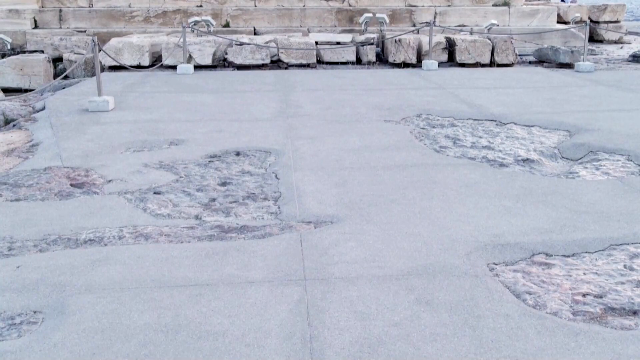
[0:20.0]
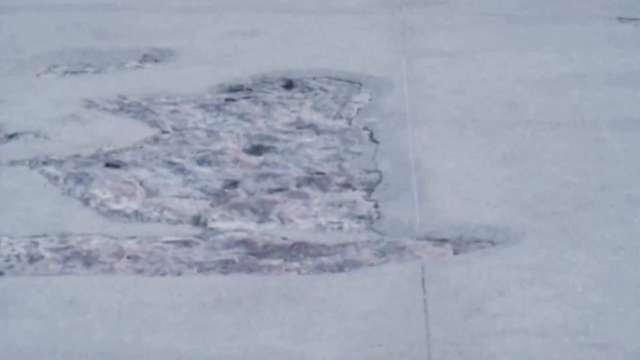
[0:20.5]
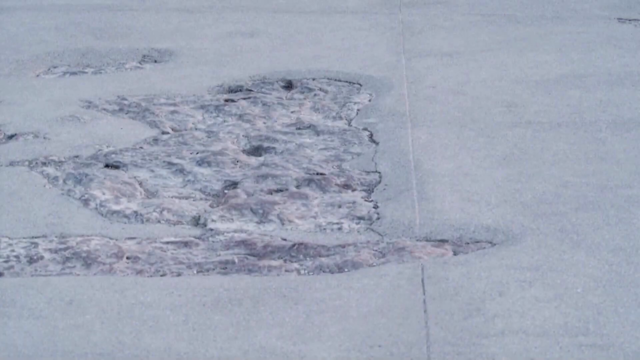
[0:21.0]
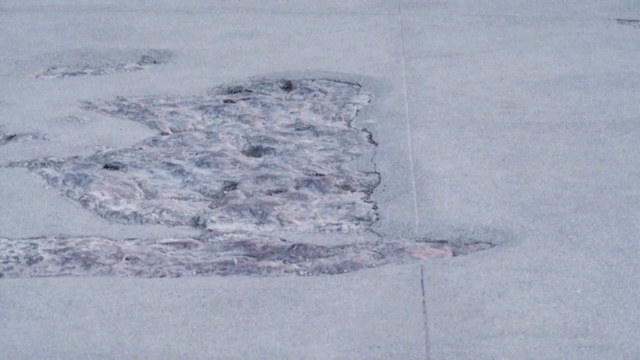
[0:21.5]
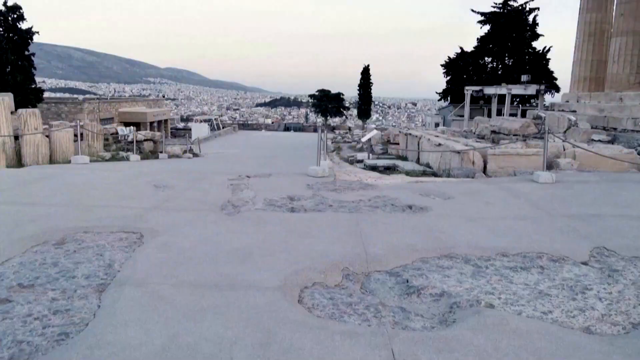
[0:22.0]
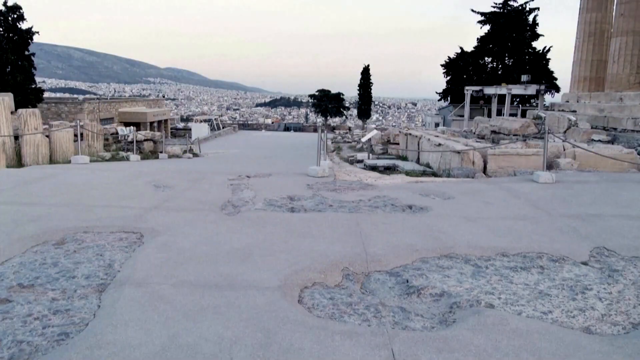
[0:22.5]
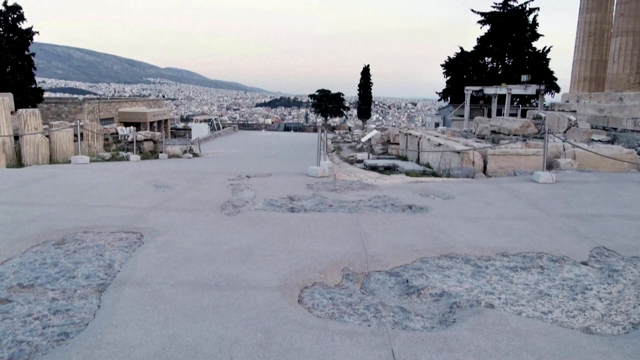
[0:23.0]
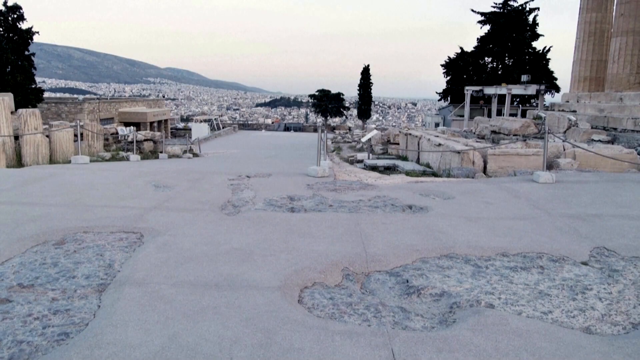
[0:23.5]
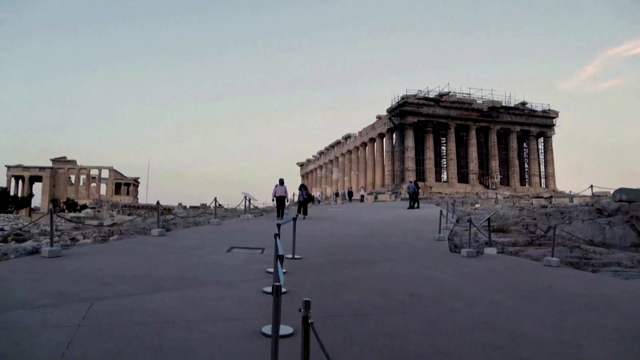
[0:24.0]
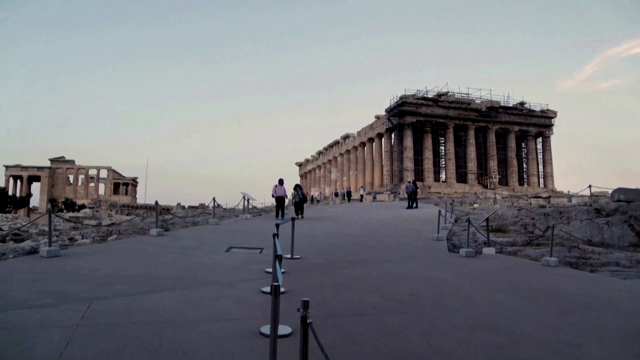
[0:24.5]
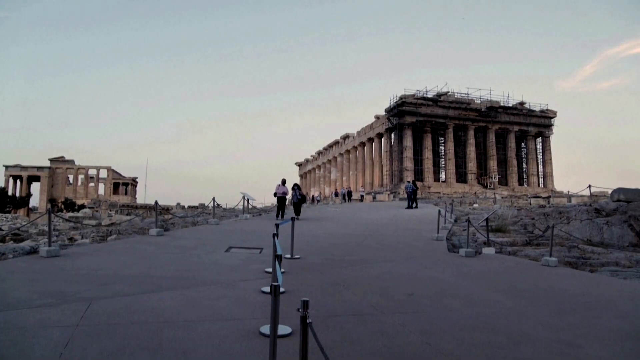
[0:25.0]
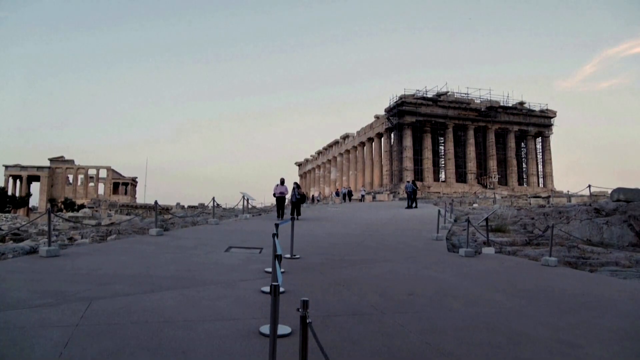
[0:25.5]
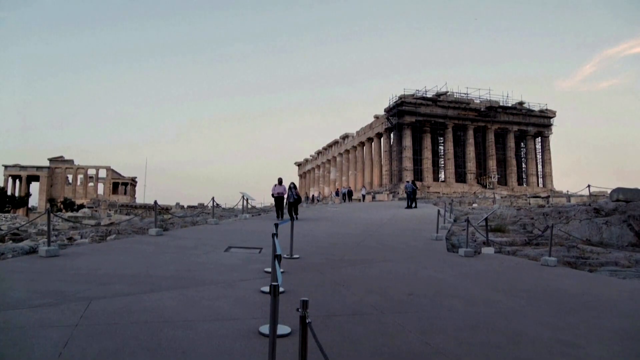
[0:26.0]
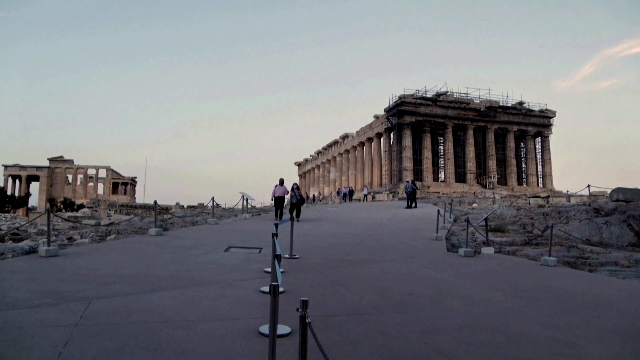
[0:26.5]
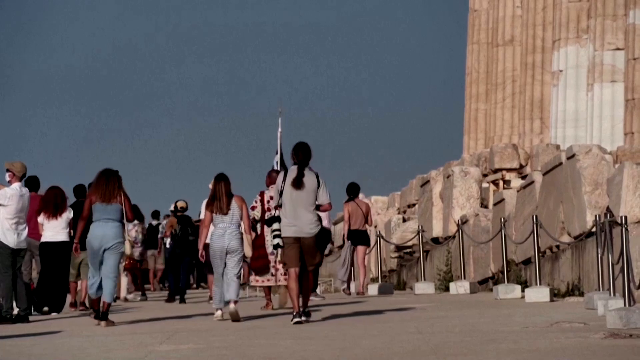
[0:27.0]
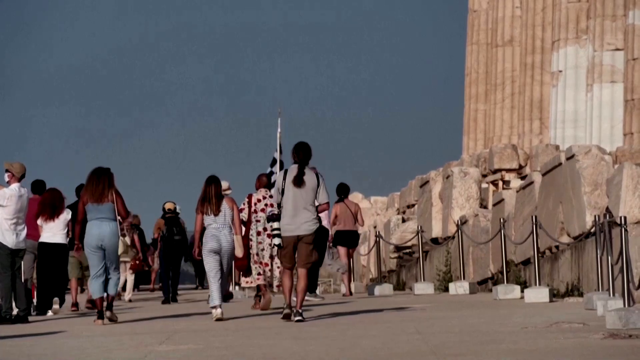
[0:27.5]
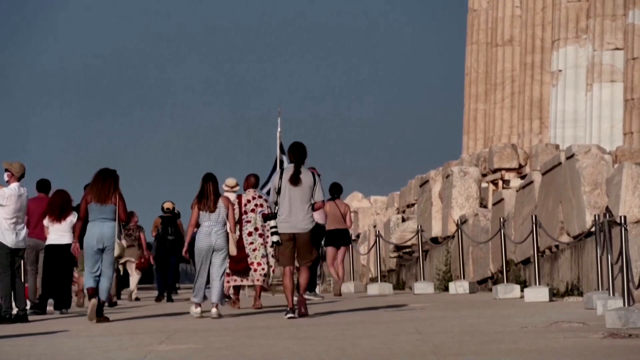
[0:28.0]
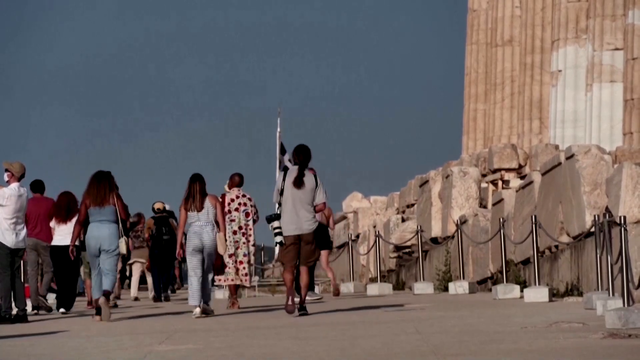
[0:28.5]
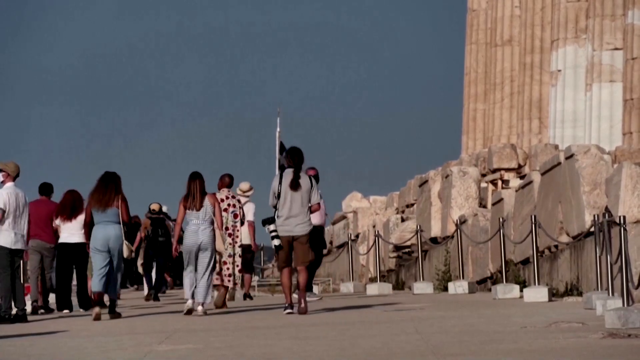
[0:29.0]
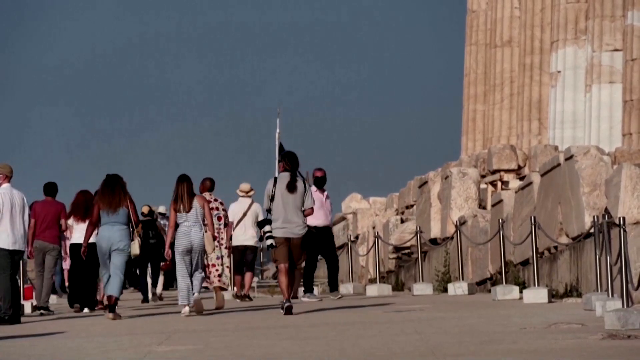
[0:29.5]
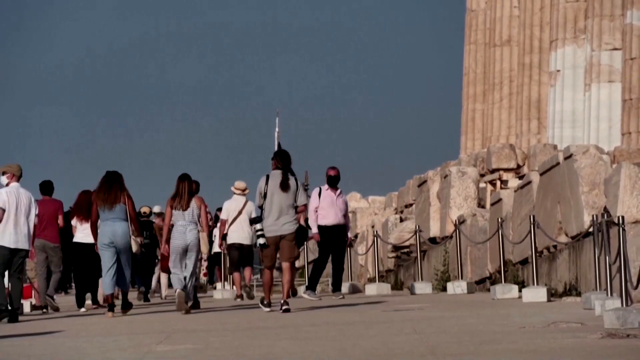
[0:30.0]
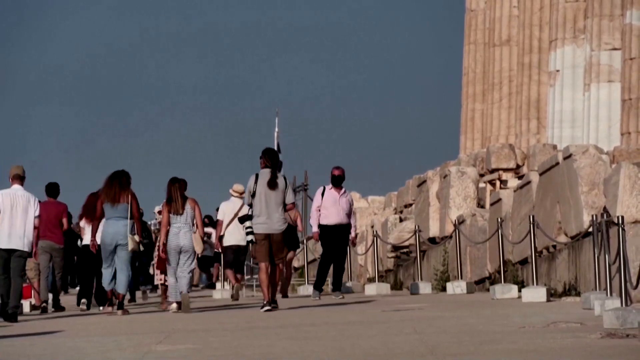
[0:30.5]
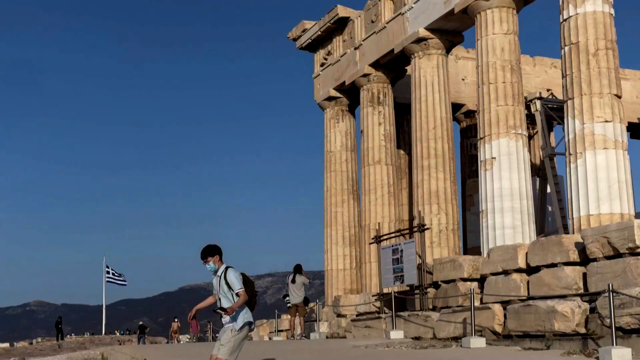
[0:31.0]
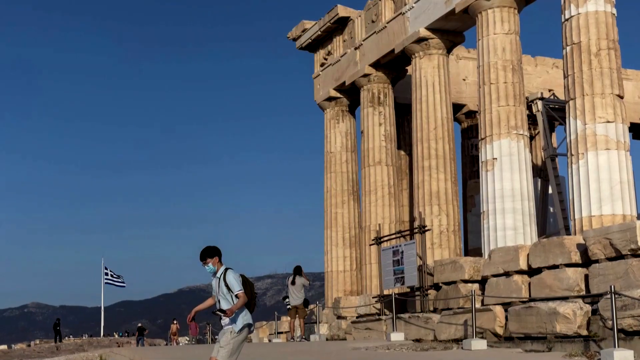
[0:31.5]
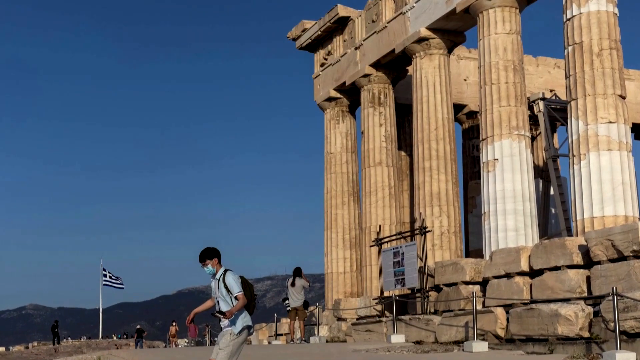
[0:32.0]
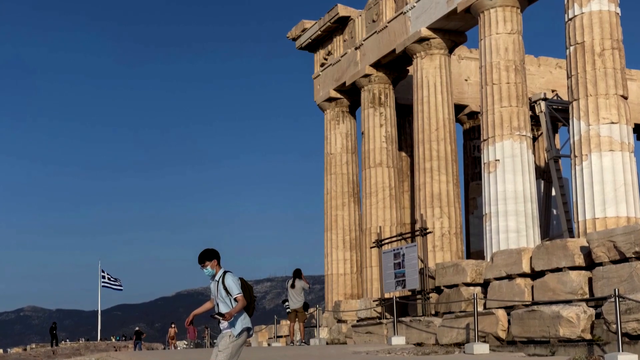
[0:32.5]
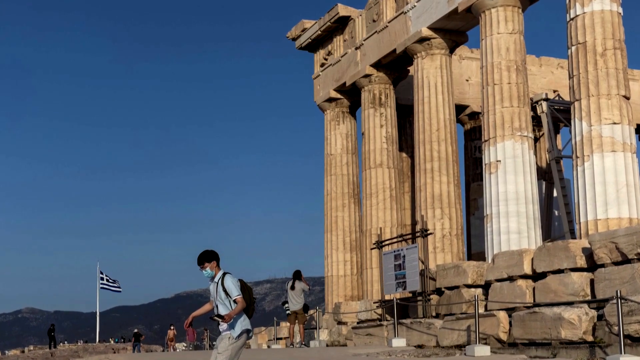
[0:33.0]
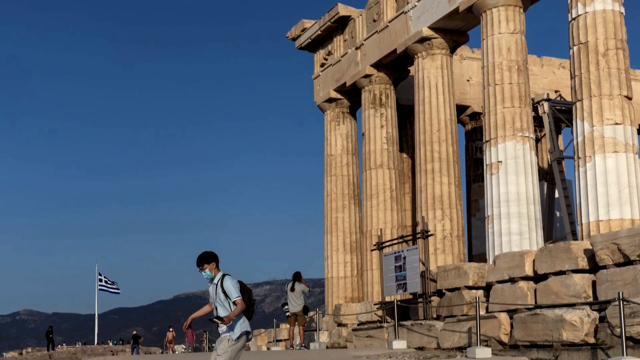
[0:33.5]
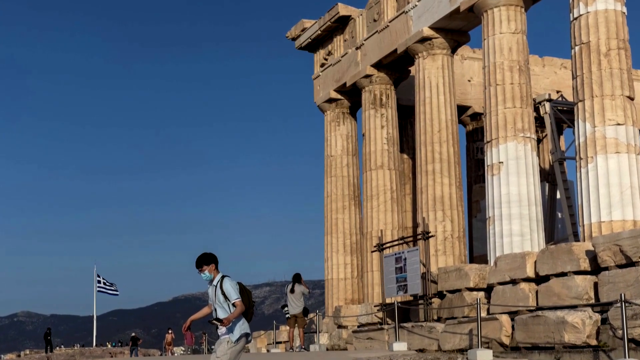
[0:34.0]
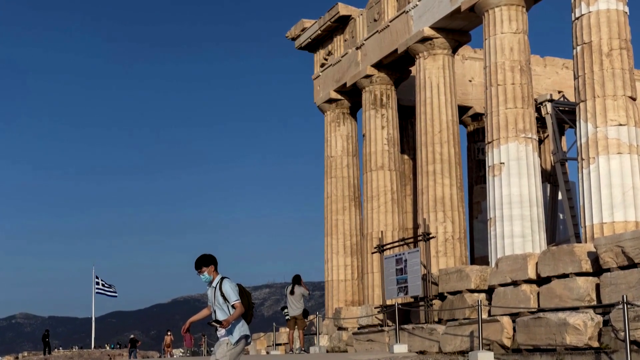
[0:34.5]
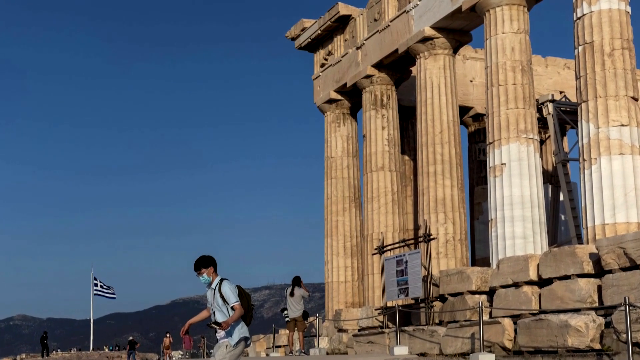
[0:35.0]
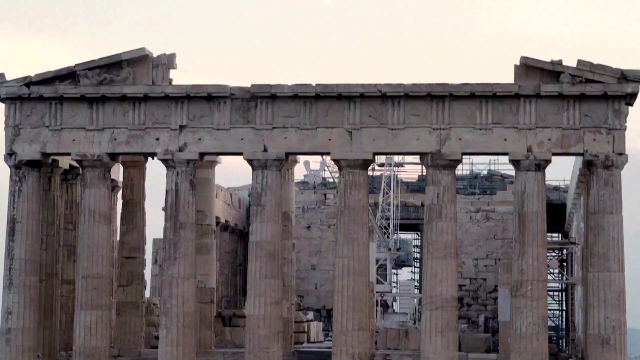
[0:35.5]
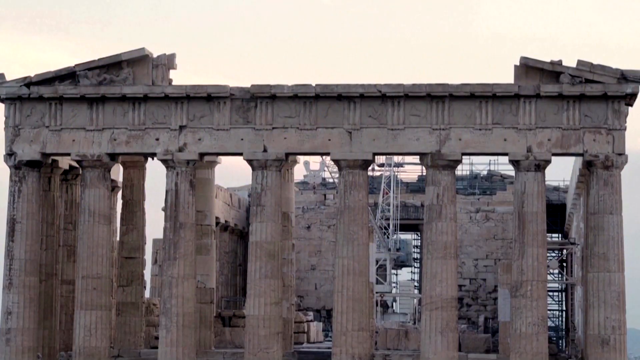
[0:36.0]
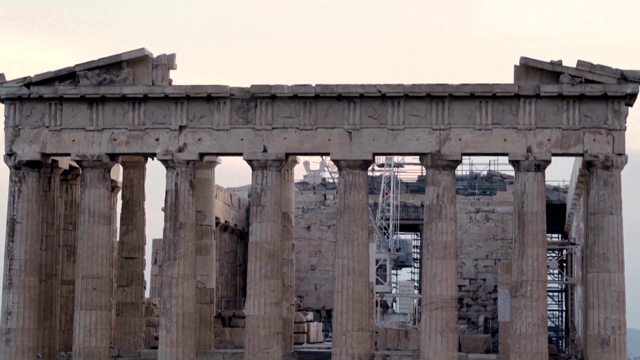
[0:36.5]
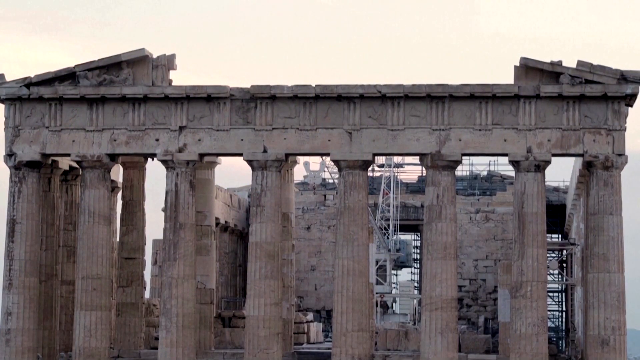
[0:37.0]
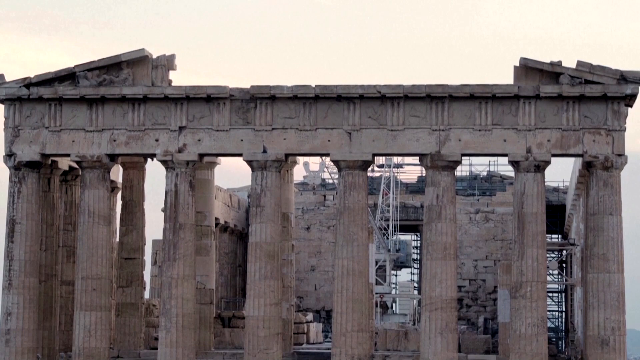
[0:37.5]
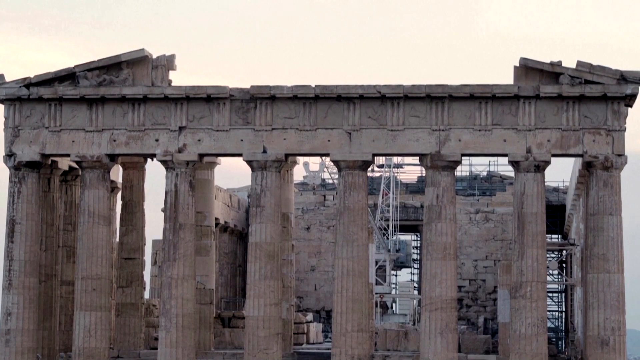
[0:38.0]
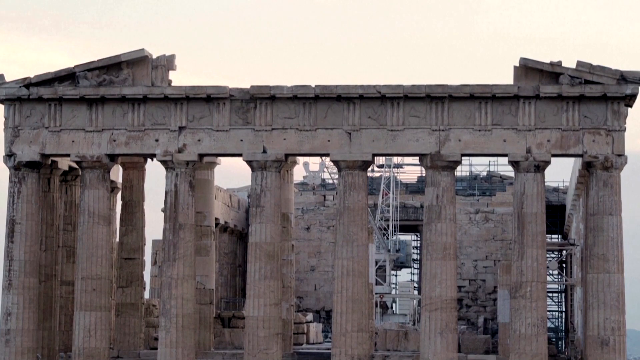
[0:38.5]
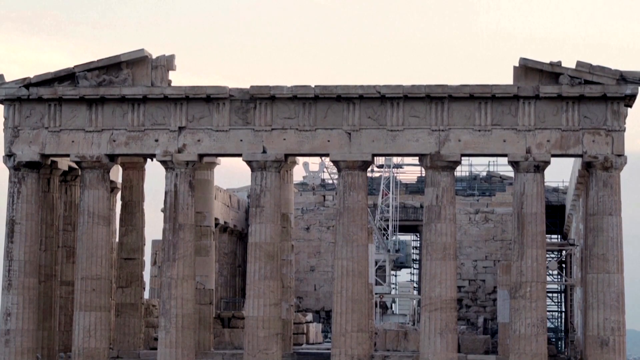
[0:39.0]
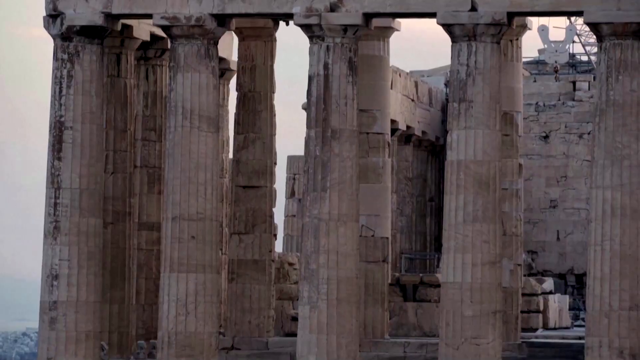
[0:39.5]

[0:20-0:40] More wear and tear is visible on the granite walking stones of the outdoor flooring. A close-up of some of the building's columns shows heavy wear and tear and discoloration; they likely used to be white but now have a yellowing, and rather than standing straight up they are kind of leaning a little. The columns don't go completely around, and it appears the whole ceiling may be gone, if there ever was one. More close-ups show the building being repaired, and a Greek flag in the background indicates this appears to be Greece. Several different sites of buildings with columns are visible, with mountains in the background. A crane stands in the middle of the open columned building, apparently being used for repair work. Little theater-style barricades are kind of all around it to keep people from walking wherever they want.